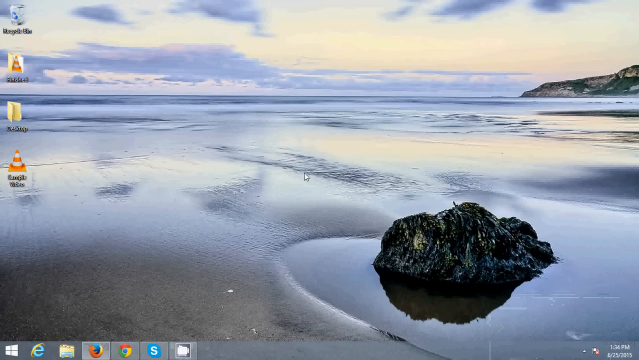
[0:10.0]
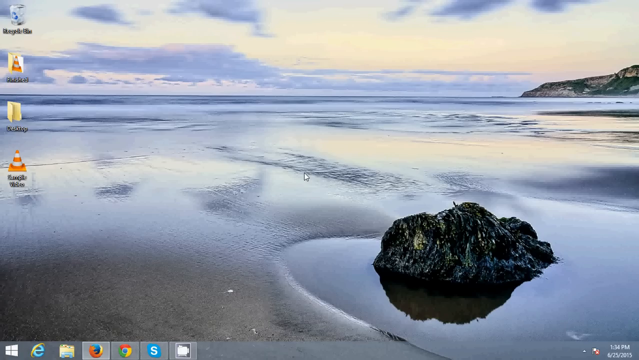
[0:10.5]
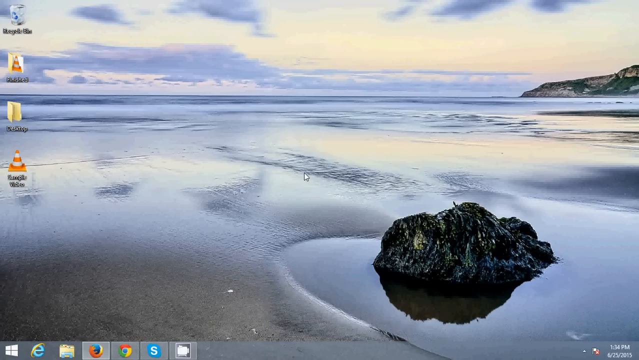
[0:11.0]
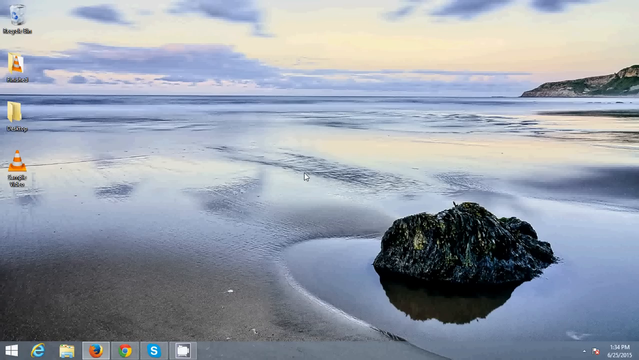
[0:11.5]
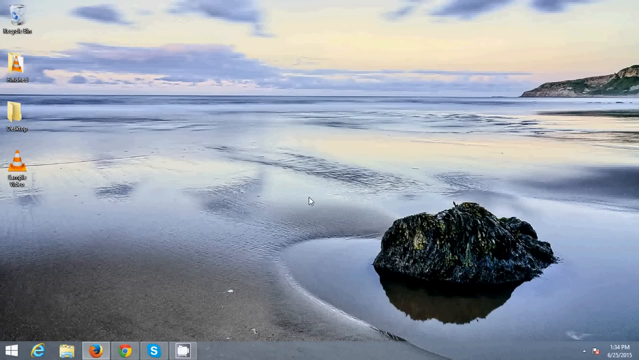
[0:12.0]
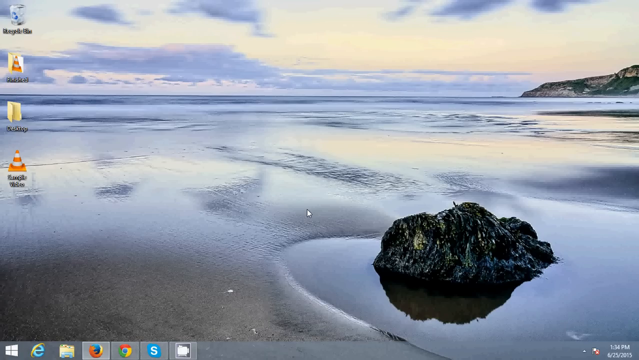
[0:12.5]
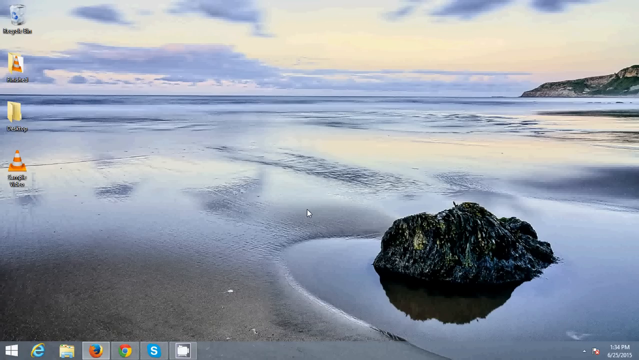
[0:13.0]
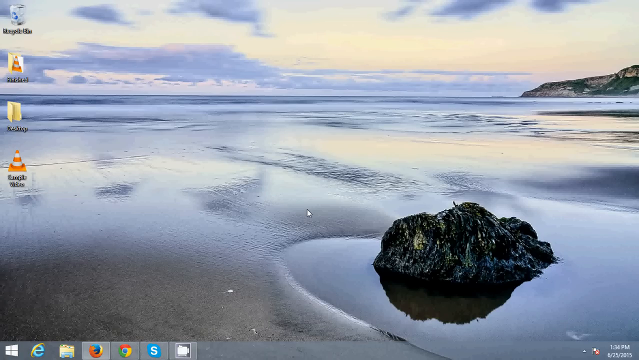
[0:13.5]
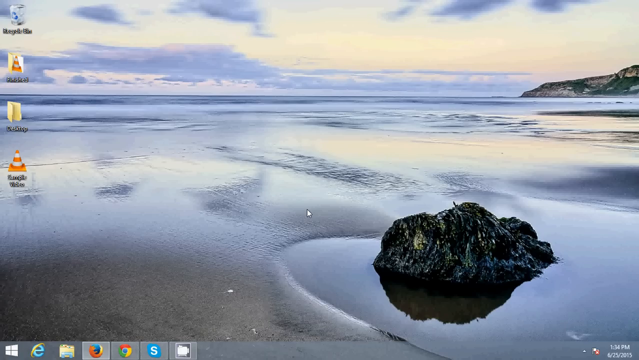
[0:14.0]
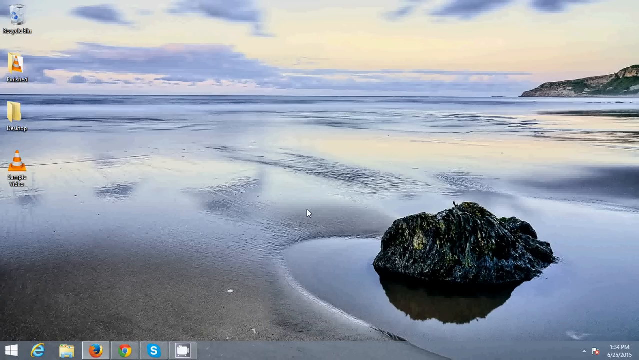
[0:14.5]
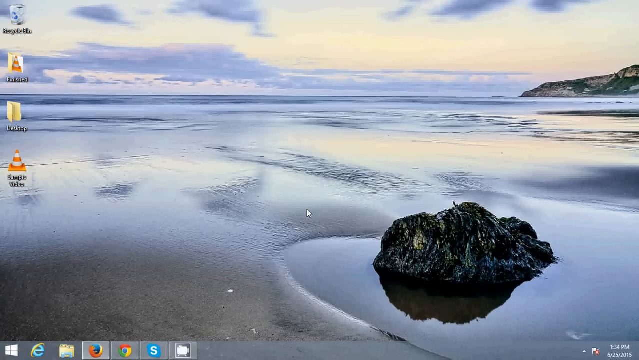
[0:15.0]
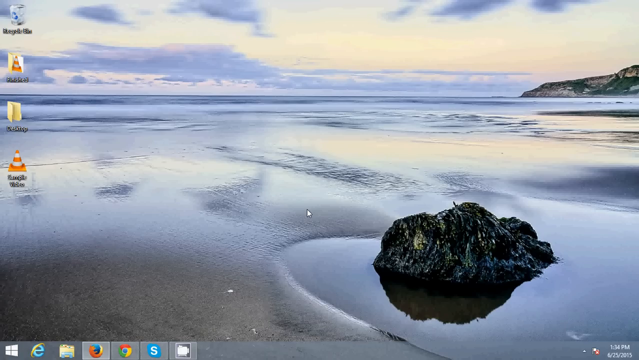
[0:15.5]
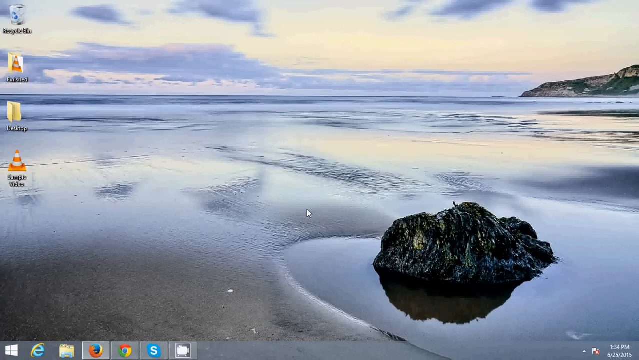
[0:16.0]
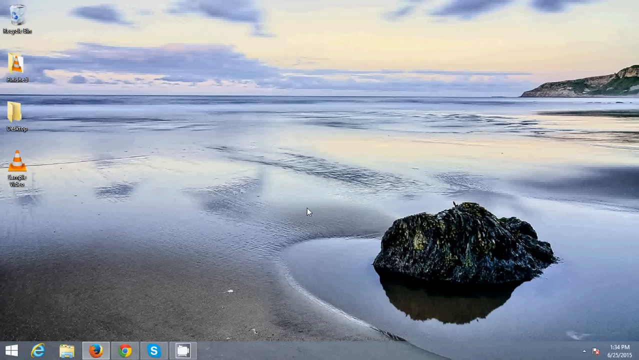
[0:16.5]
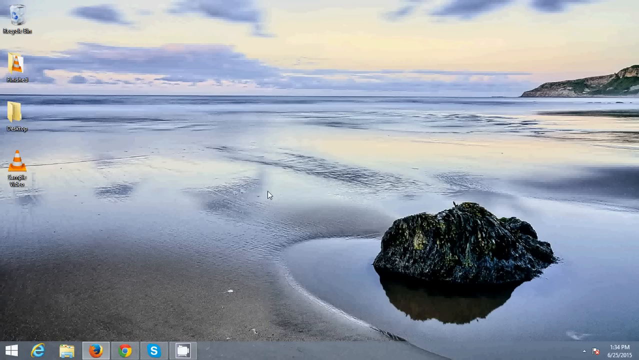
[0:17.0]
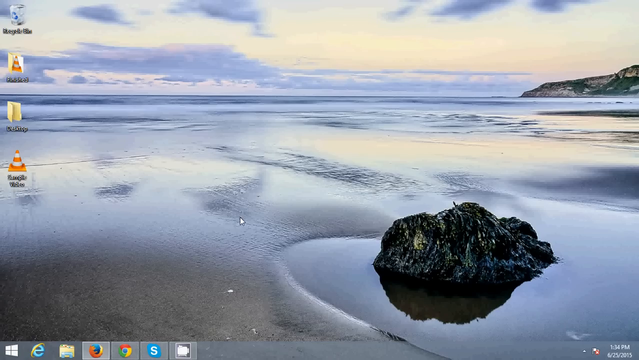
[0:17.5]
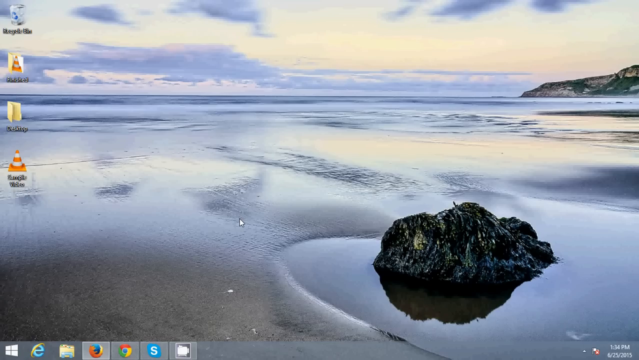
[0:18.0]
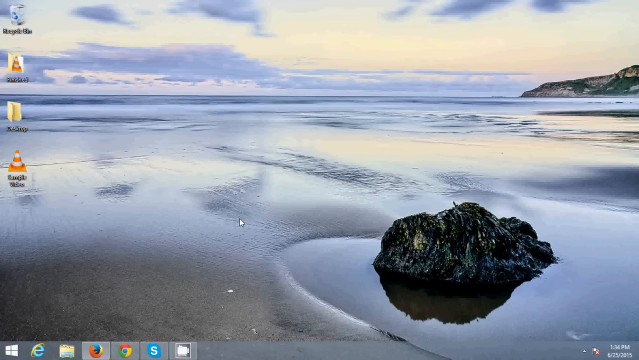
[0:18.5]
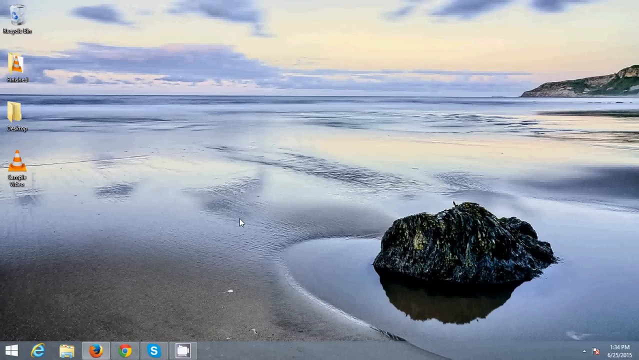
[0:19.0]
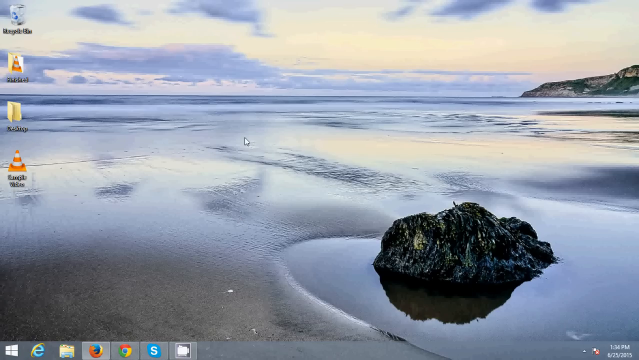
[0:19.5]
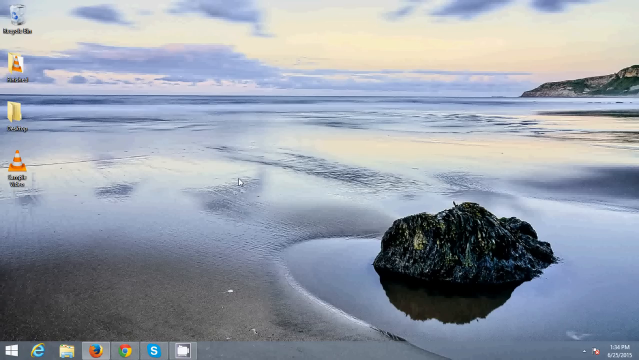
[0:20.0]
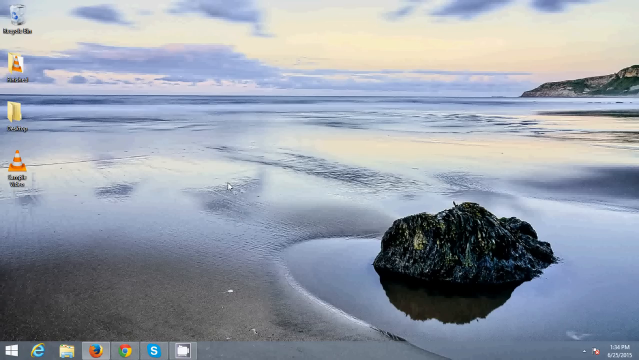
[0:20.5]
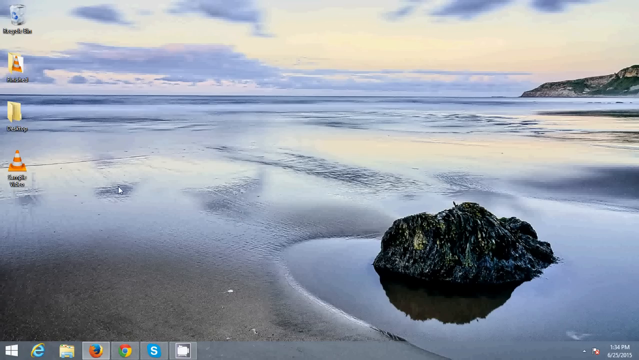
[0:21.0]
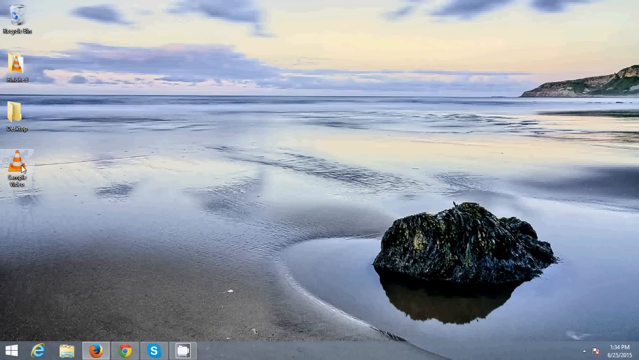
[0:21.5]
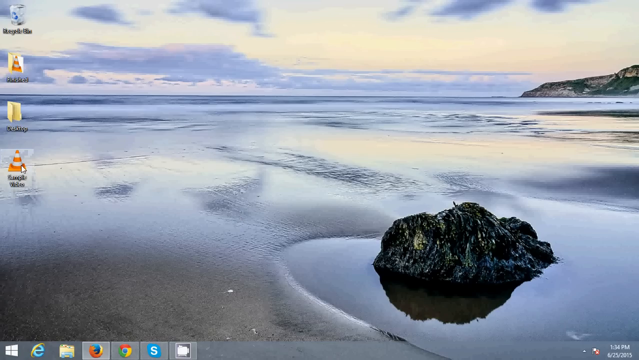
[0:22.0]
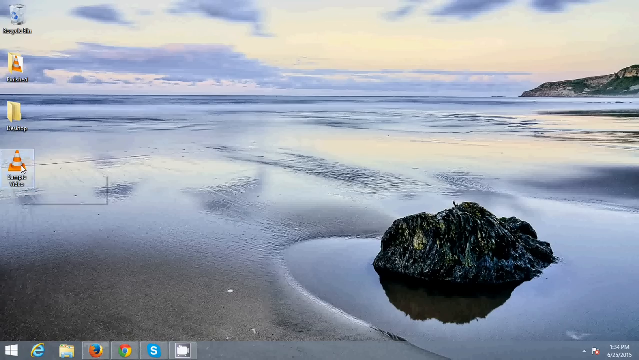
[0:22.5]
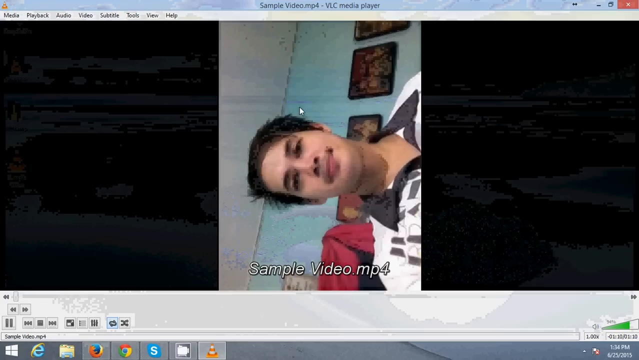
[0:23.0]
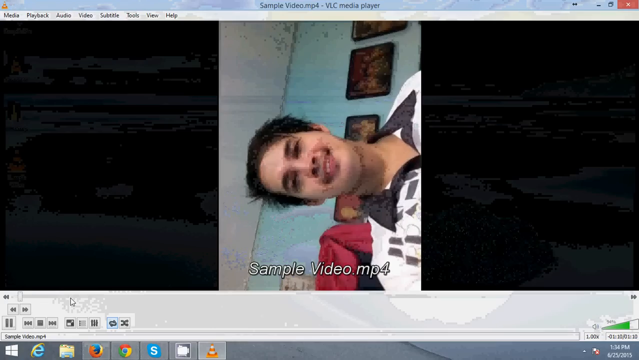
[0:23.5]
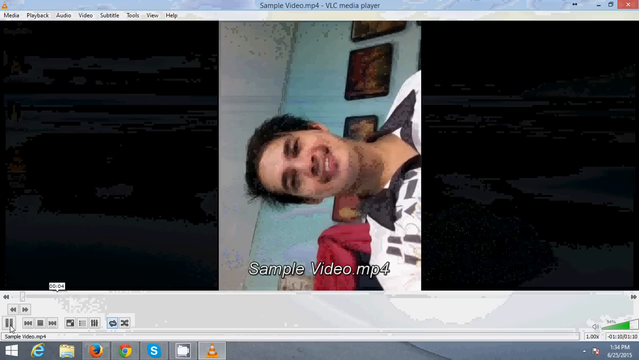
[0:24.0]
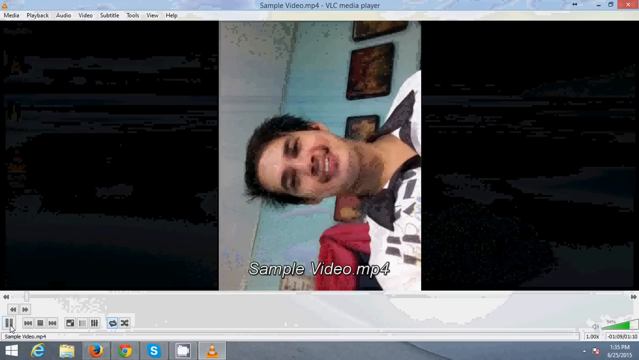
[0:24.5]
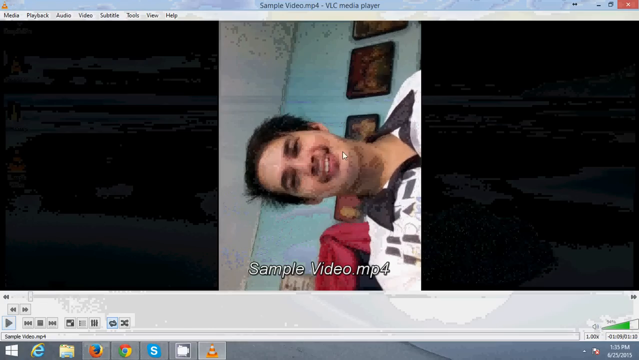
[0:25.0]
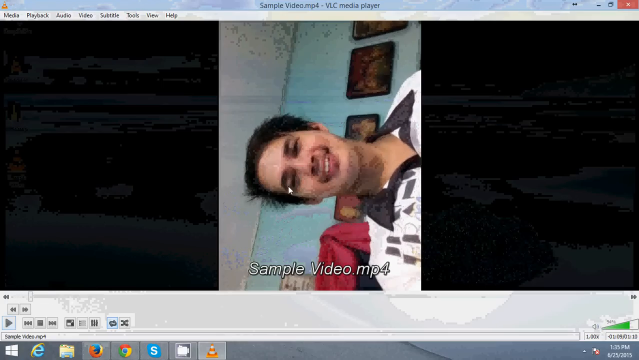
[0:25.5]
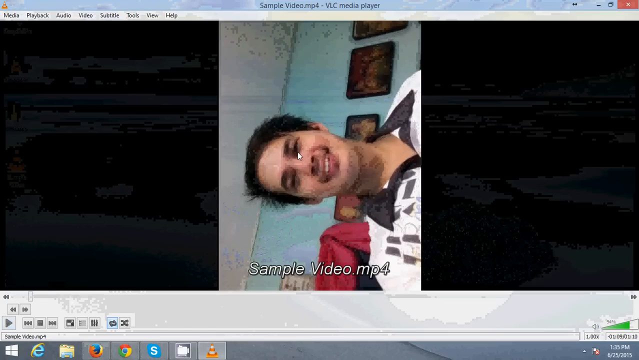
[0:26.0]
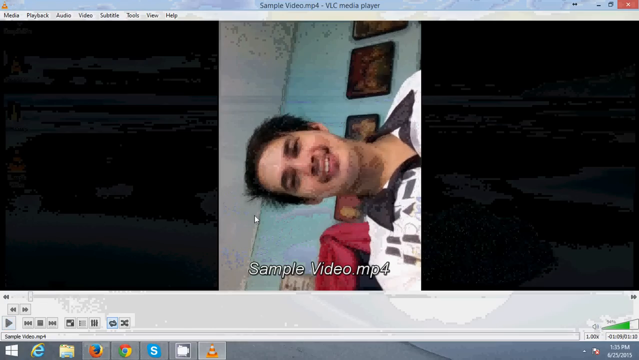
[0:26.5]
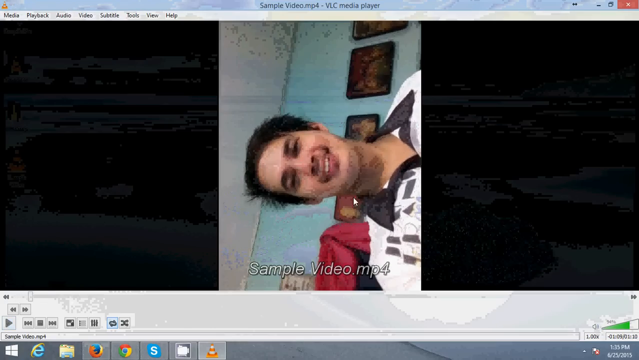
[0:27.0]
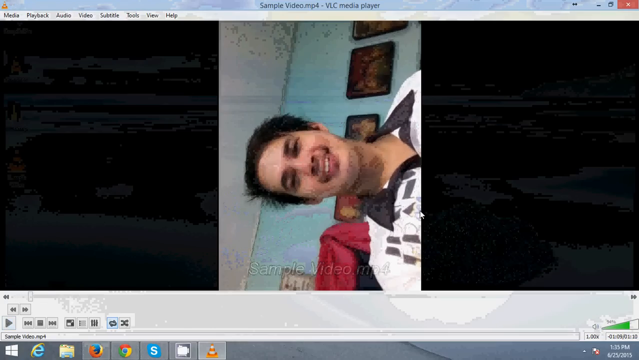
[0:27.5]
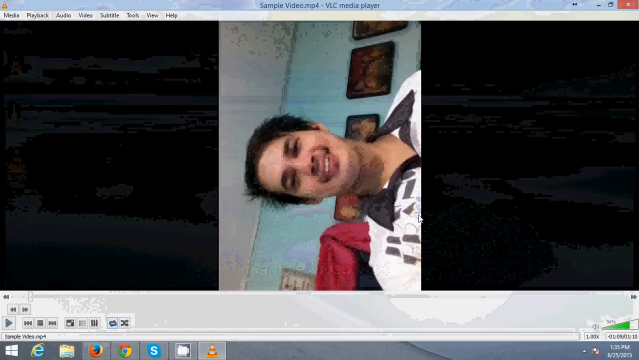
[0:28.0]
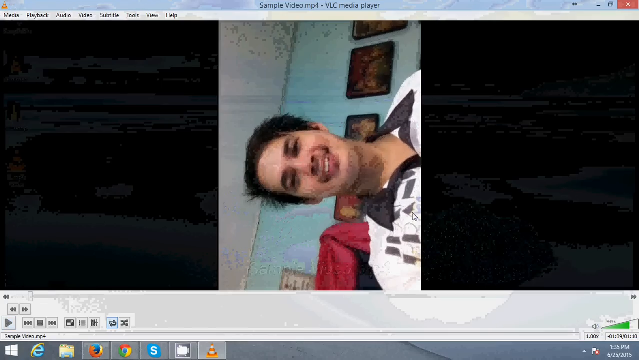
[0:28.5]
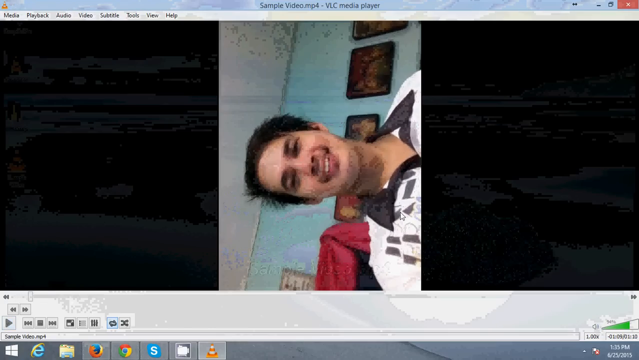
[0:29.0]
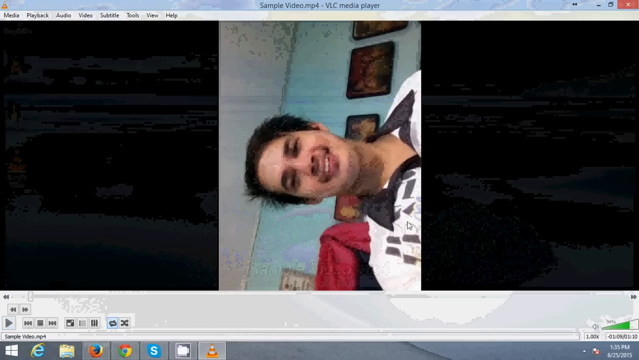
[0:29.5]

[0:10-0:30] The same Windows desktop is shown, with the background picture of the sea with the tide out on a clear day and the rock in the front. A small white cursor, a standard mouse pointer, moves around the screen toward the left-hand side and double-clicks the traffic cone icon, which opens a video. The video was shot in vertical mode but is tilted so that it would be viewed horizontally, and it says "sample video MP4". It shows a man with dark hair in a white shirt with a black collar who looks at the camera and smiles. The video is then paused, and the mouse moves around the screen after the video has stopped playing.